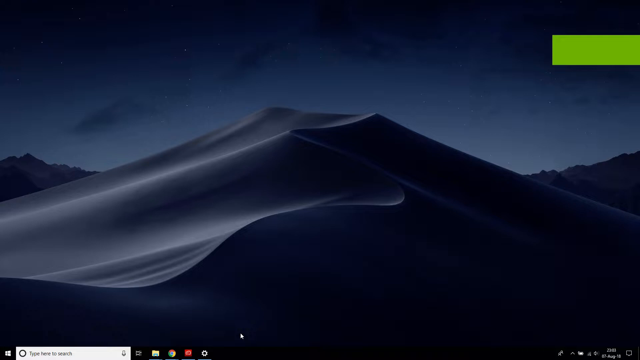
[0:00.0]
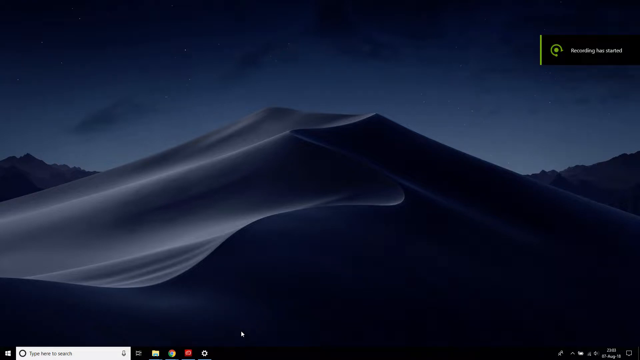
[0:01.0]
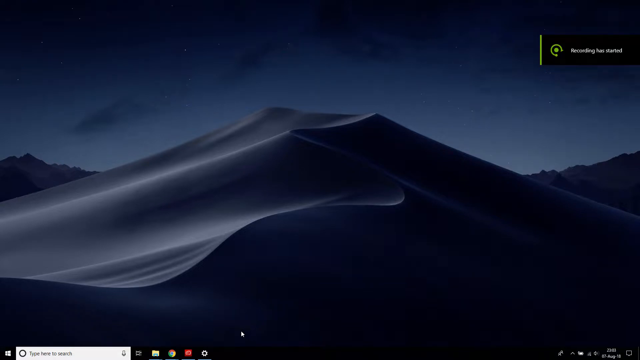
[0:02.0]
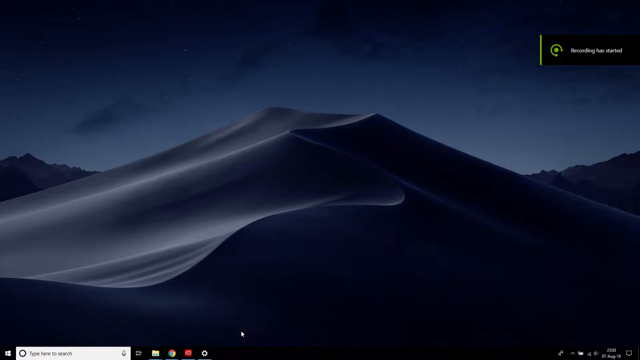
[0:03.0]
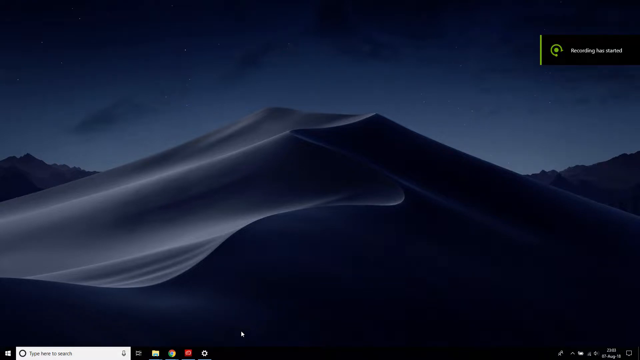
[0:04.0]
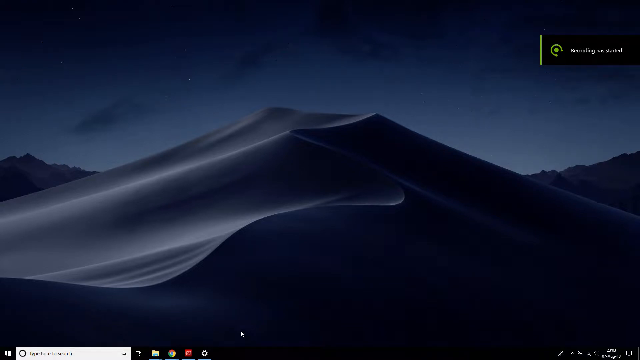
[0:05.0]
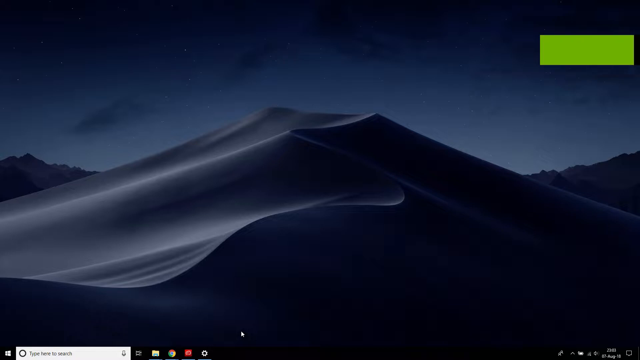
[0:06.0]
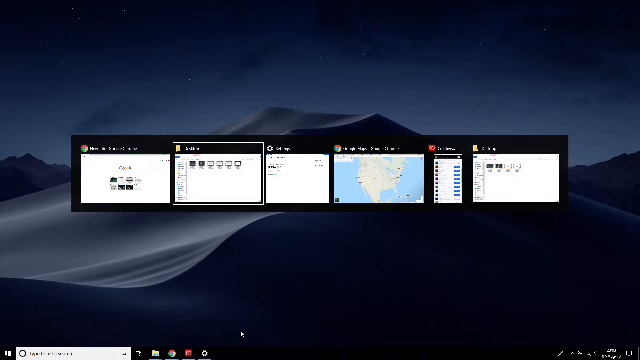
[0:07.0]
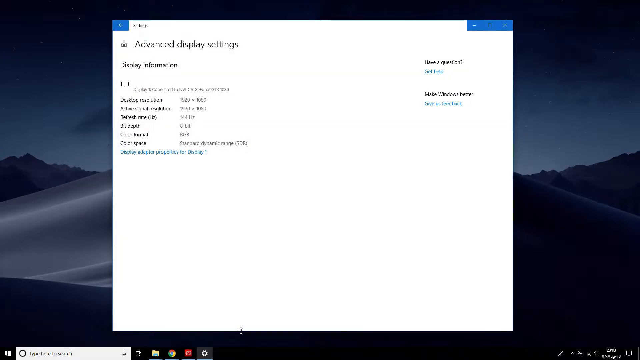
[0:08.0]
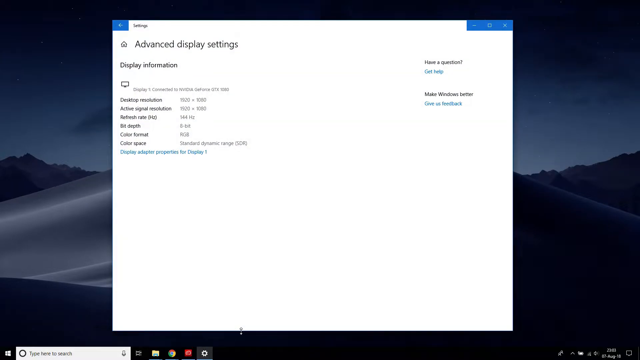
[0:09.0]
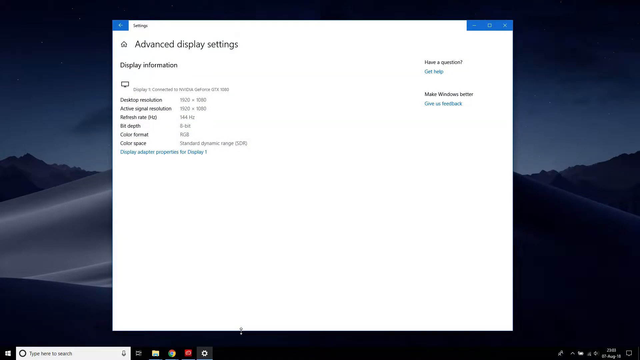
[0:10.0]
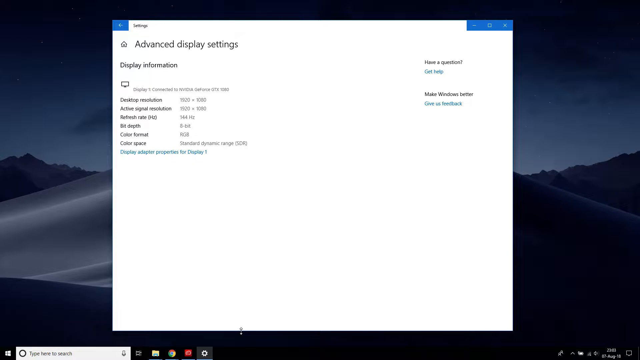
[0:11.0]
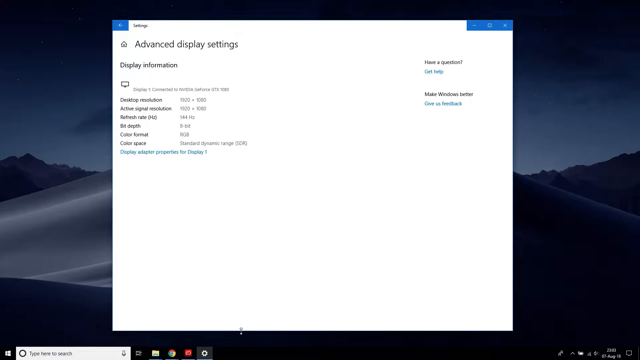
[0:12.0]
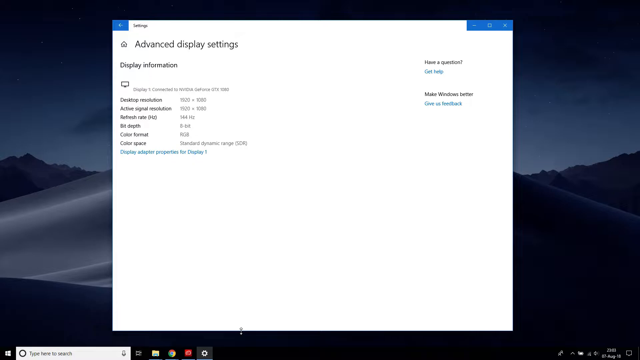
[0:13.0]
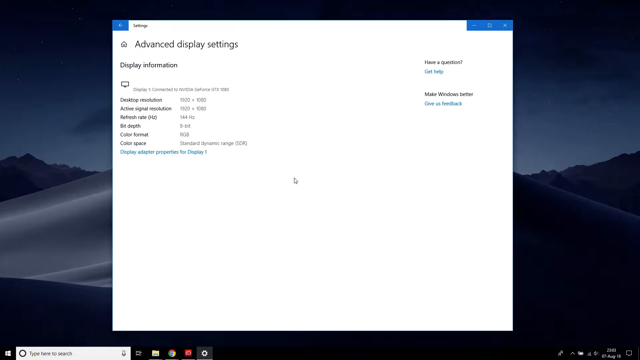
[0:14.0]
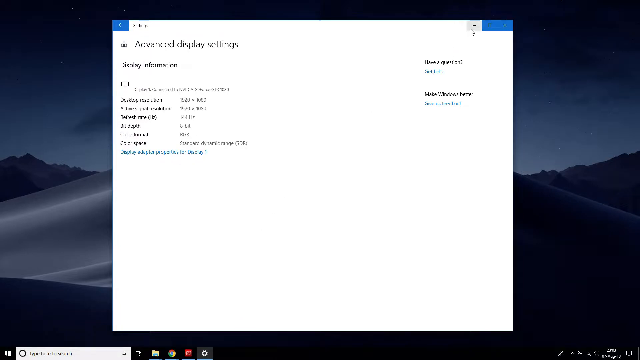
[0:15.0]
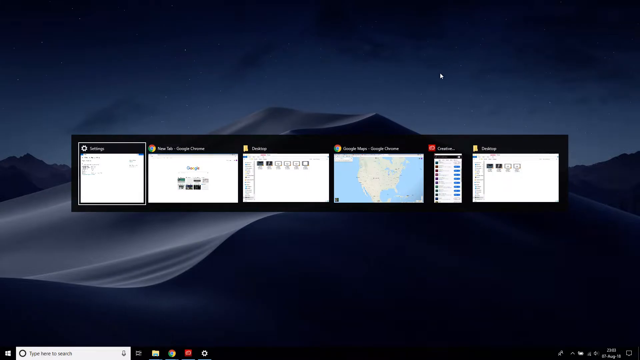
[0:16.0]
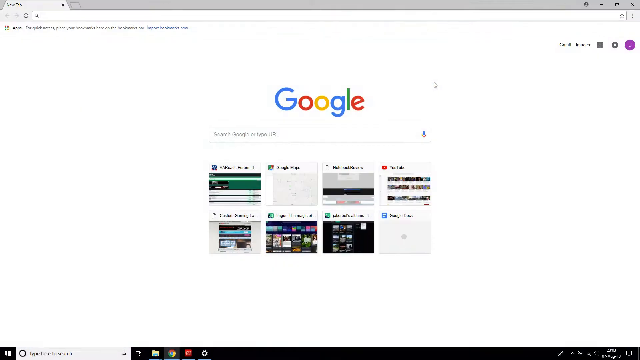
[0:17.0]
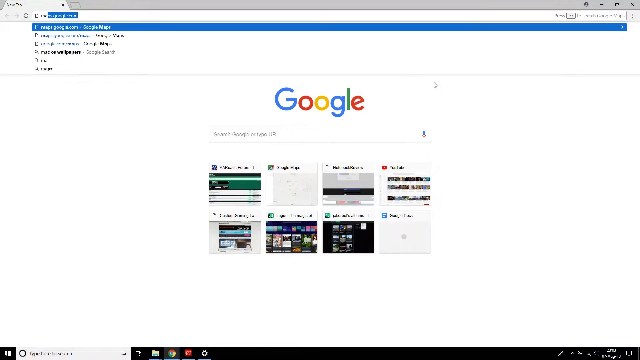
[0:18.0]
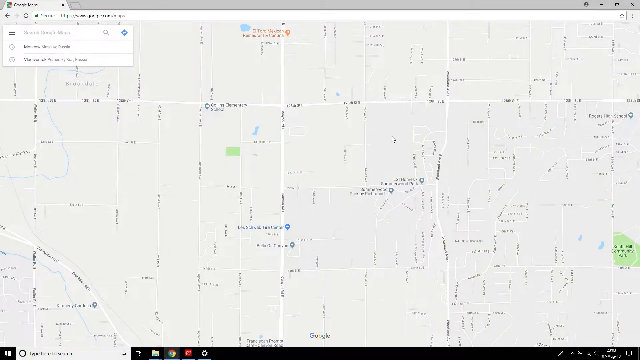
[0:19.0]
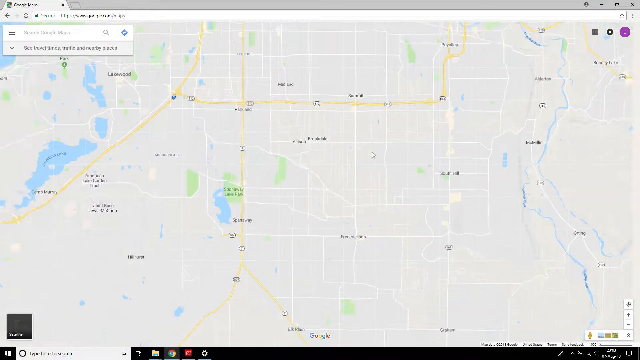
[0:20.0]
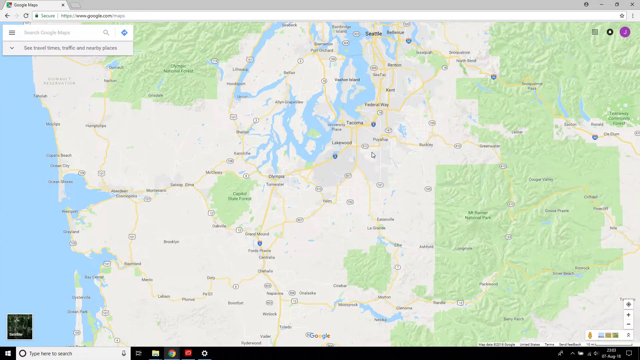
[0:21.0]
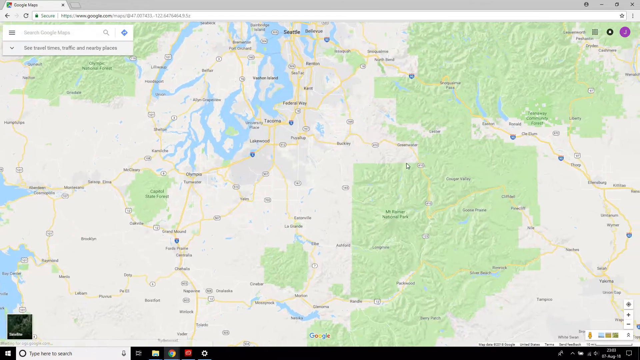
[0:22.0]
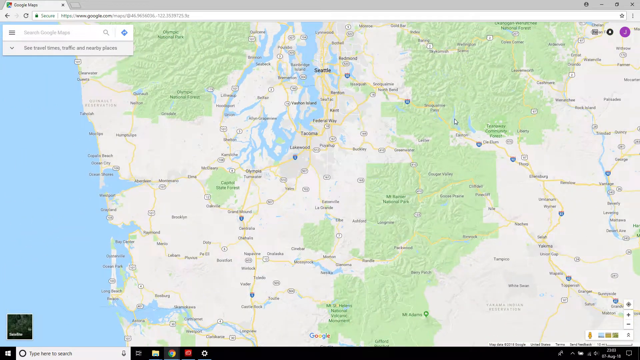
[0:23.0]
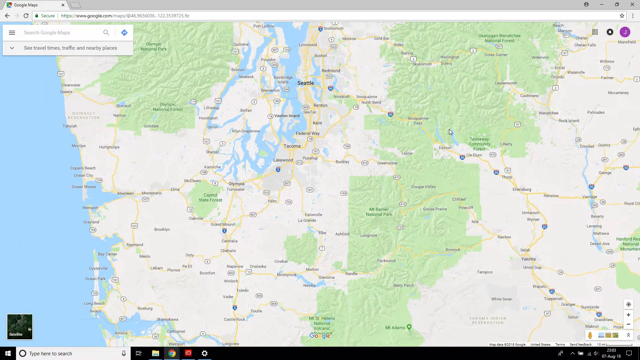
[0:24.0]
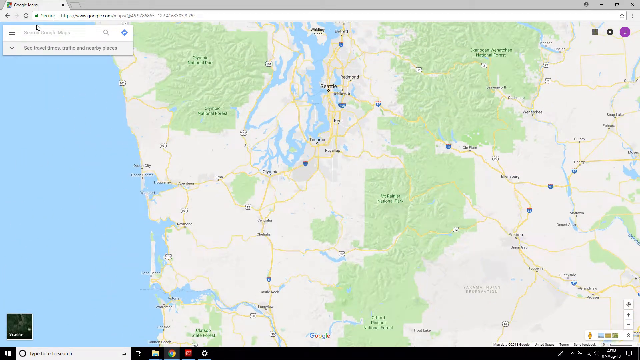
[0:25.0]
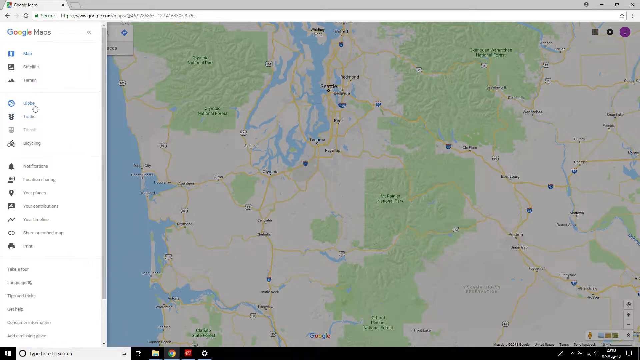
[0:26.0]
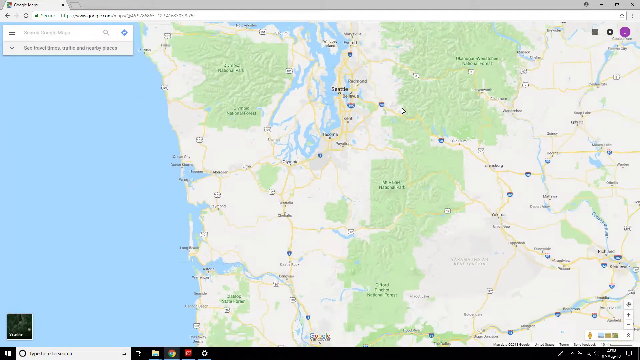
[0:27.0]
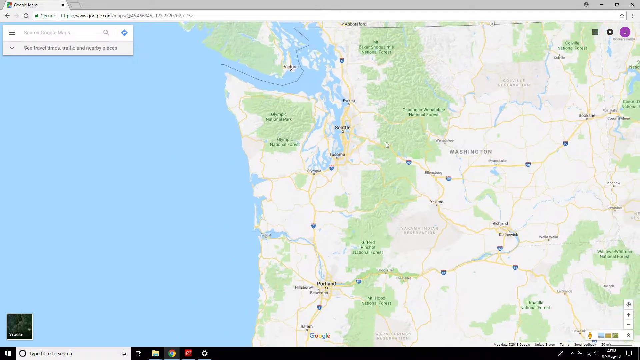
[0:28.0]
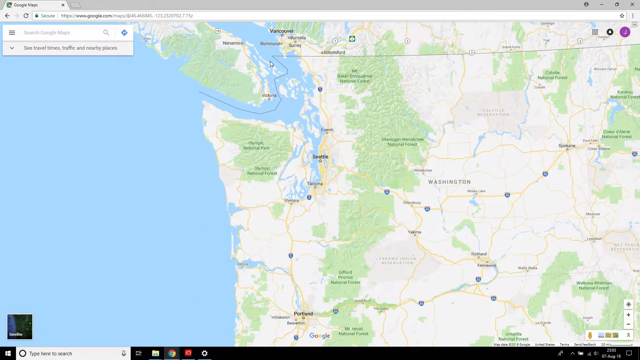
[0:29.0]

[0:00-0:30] The screen shows a mountain or a sand dune with a pathway coming down the middle. It turns out to apparently be a computer desktop background, because a pop-up suddenly appears listing different computer applications, apparently including app music, a couple of downloads folders, and Google Chrome. The person clicks on the settings window, and a display settings window pops up showing the computer's display. They close that tab and open Google, then go to maps and start scrolling out on a map. The screen is a little blurry, so it is hard to tell what the map shows, but it seems to resemble the Northwest U.S. They keep making the map larger.